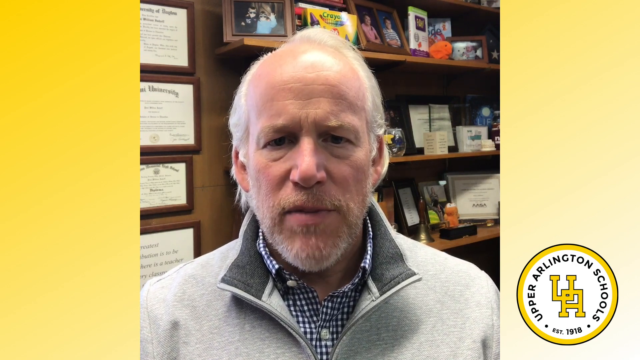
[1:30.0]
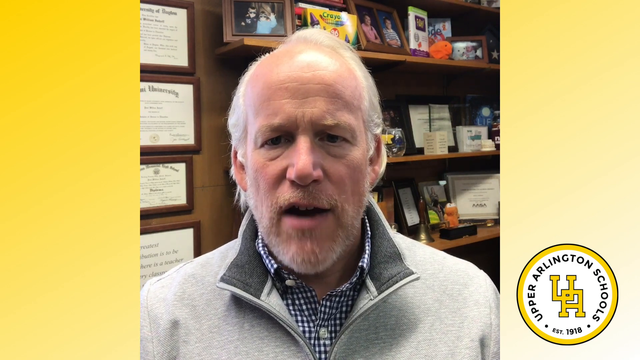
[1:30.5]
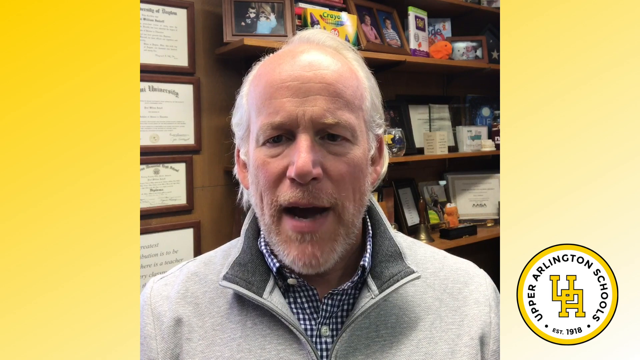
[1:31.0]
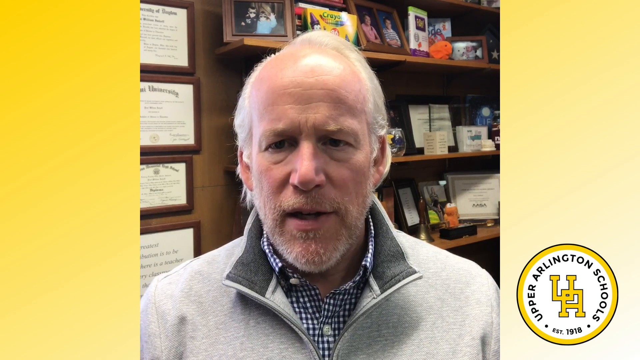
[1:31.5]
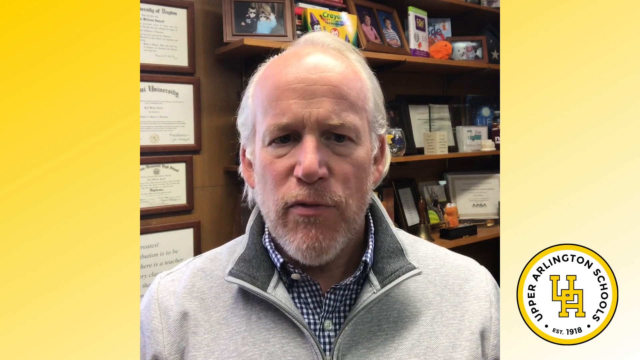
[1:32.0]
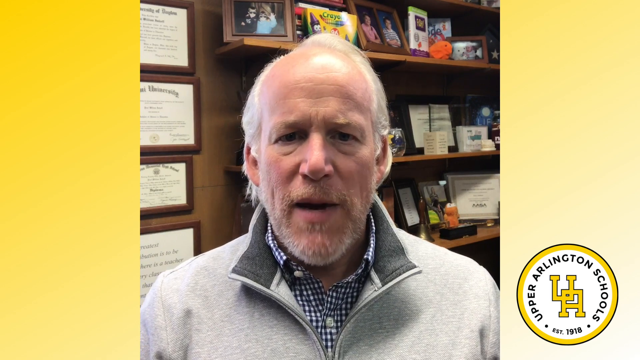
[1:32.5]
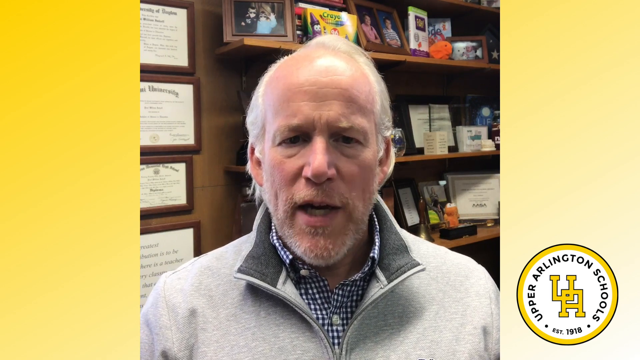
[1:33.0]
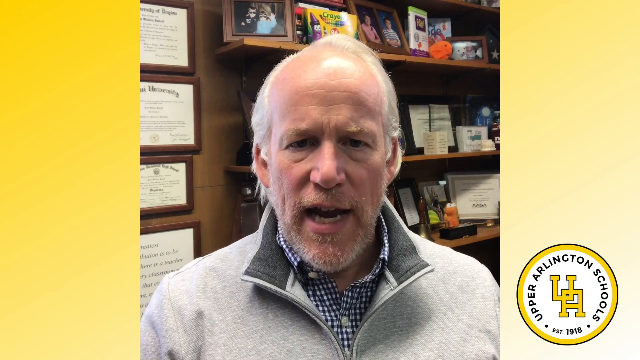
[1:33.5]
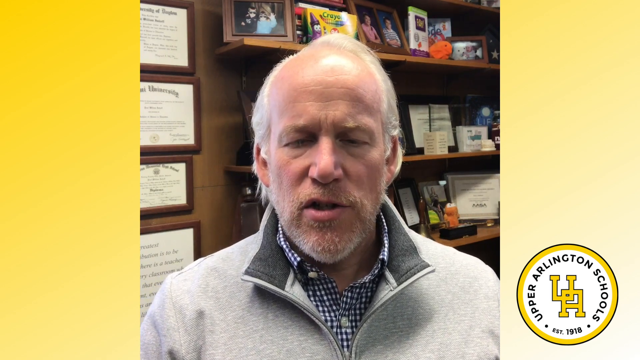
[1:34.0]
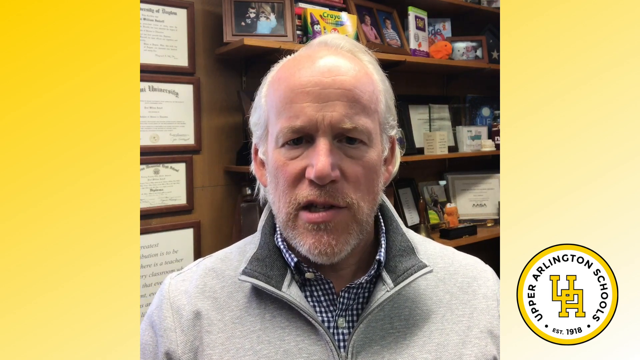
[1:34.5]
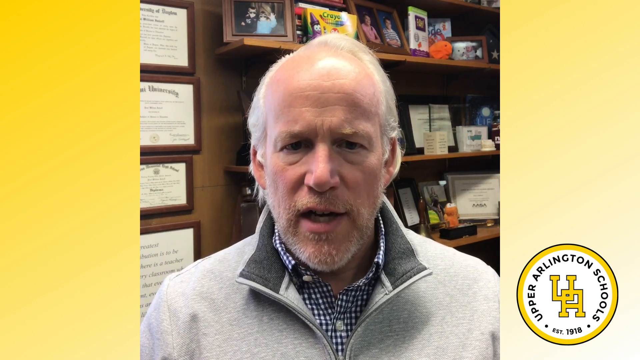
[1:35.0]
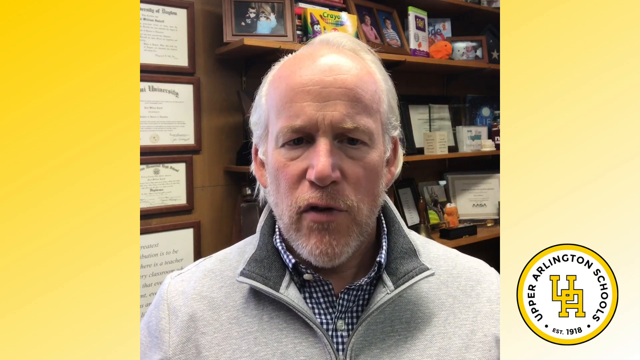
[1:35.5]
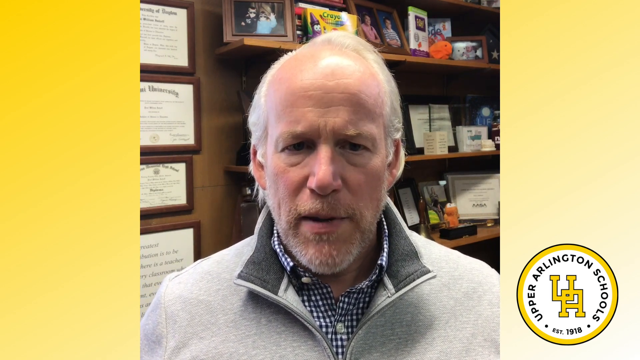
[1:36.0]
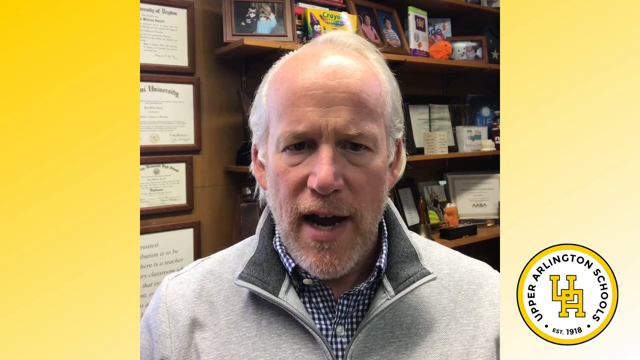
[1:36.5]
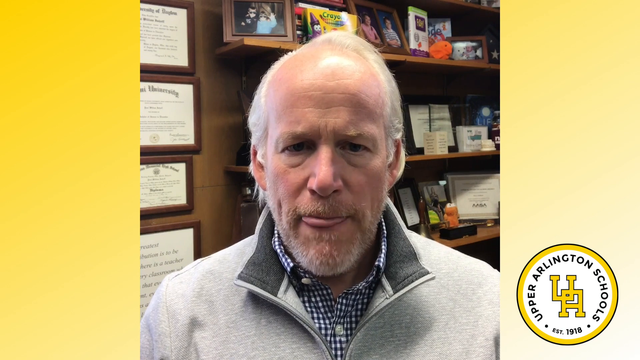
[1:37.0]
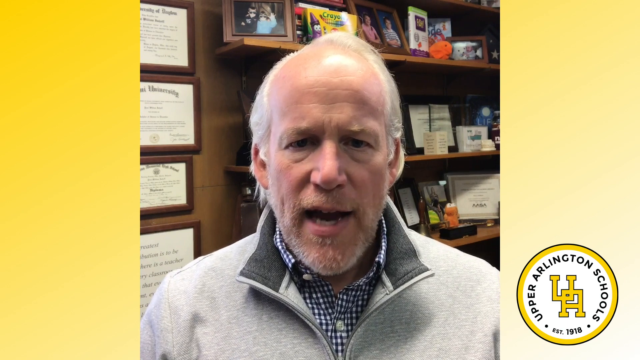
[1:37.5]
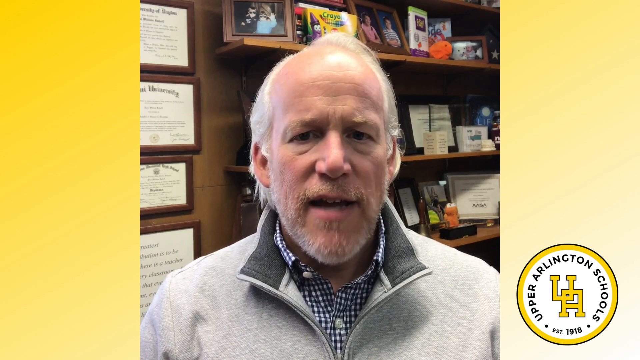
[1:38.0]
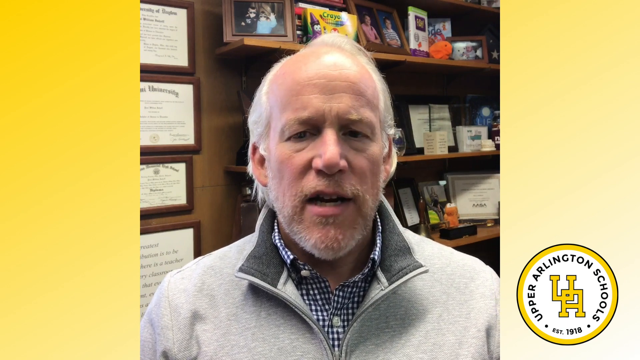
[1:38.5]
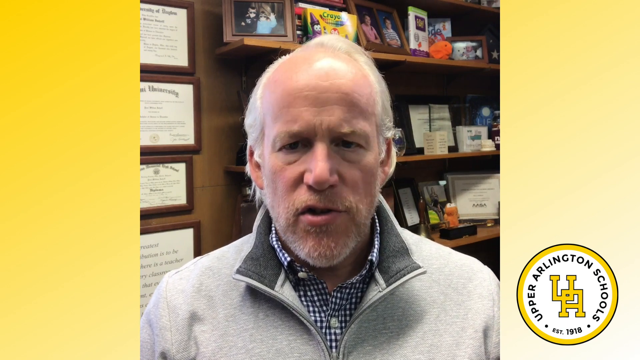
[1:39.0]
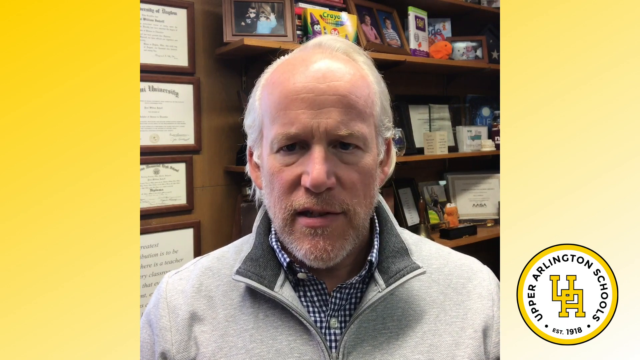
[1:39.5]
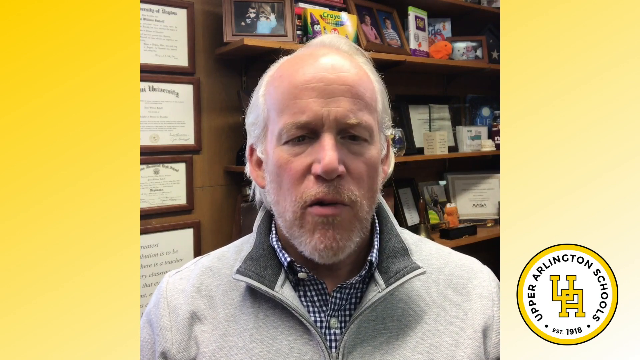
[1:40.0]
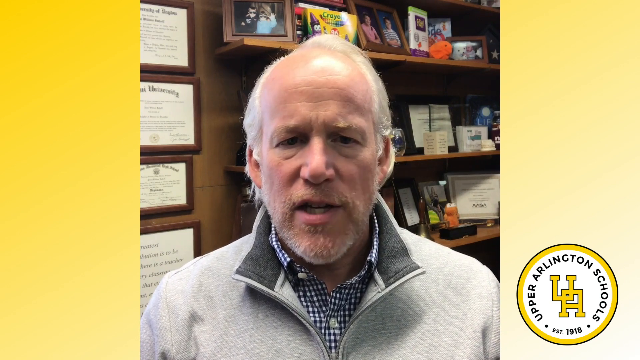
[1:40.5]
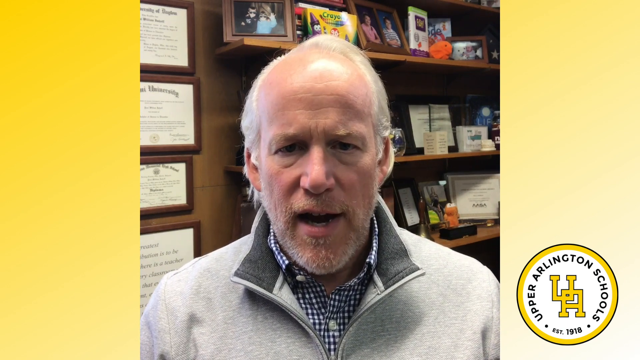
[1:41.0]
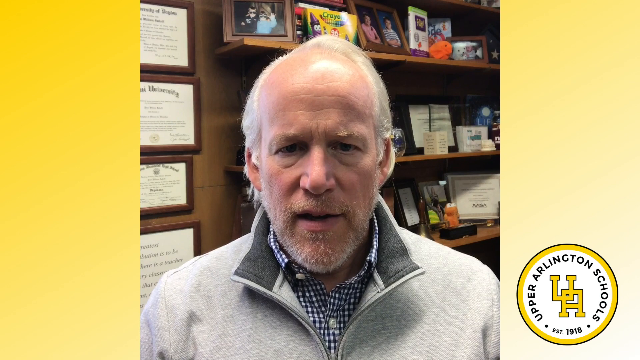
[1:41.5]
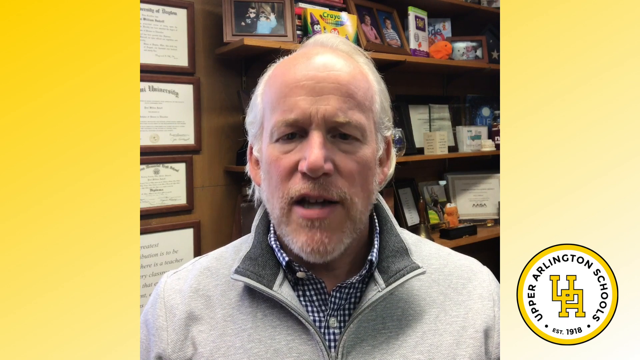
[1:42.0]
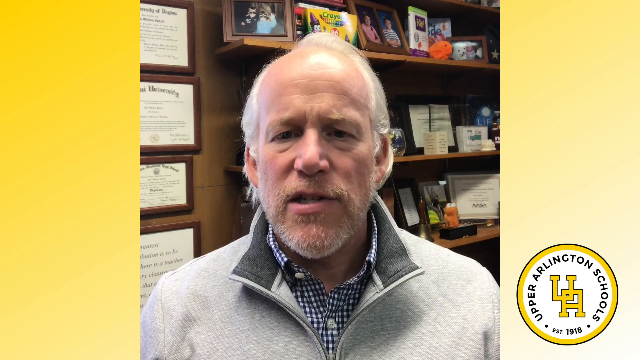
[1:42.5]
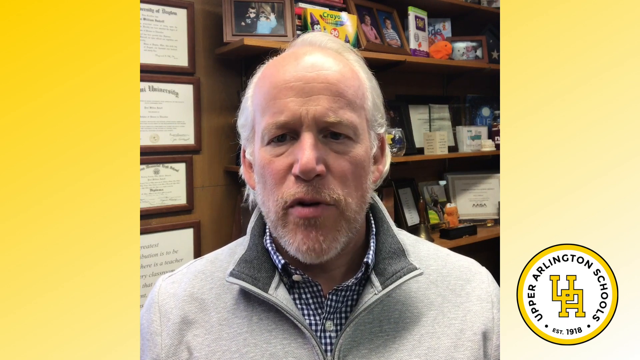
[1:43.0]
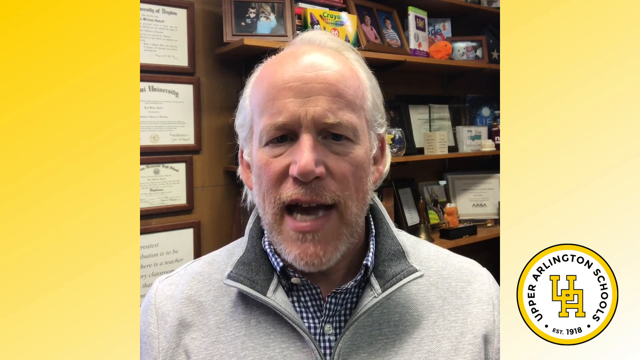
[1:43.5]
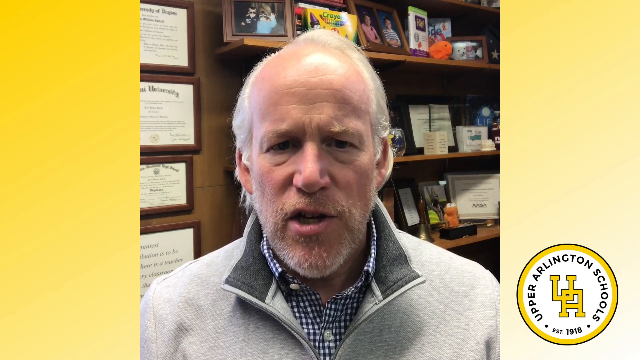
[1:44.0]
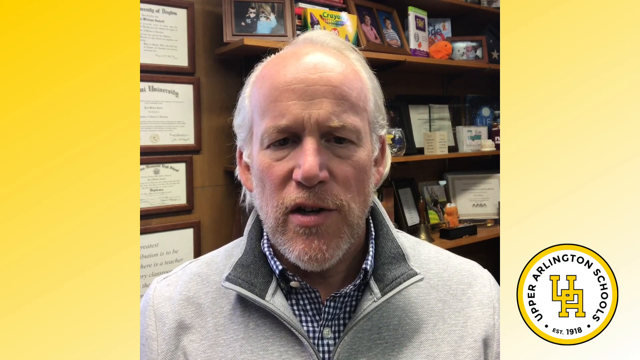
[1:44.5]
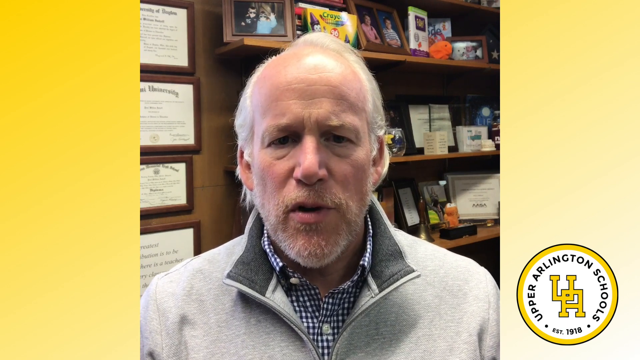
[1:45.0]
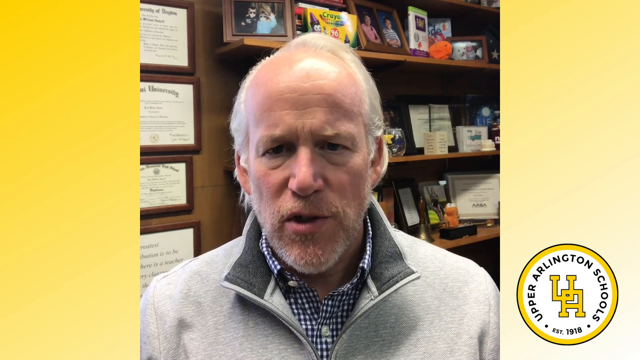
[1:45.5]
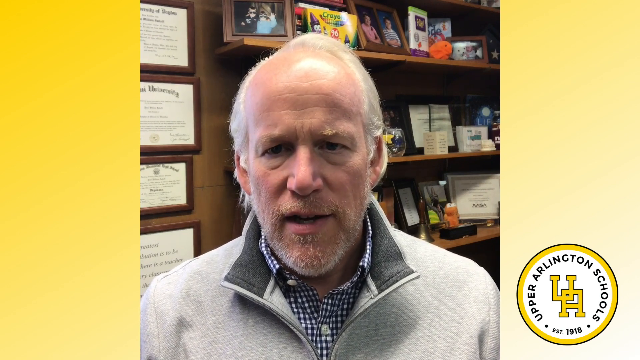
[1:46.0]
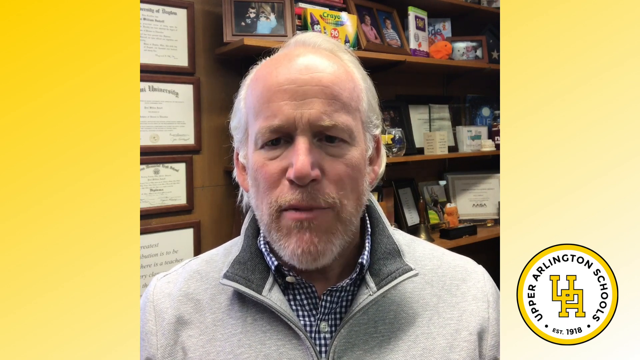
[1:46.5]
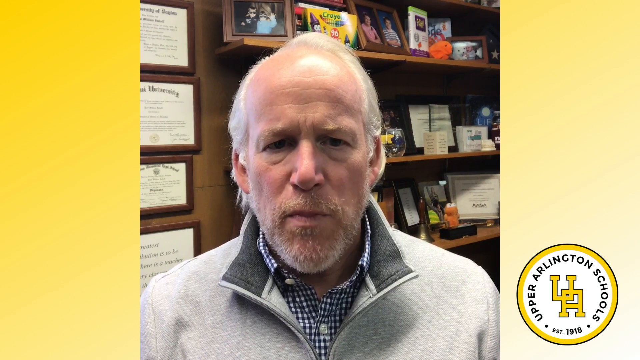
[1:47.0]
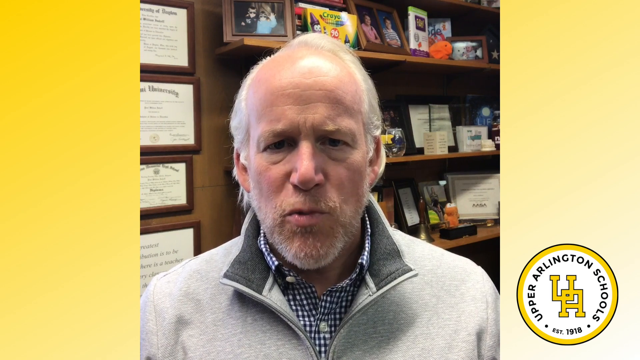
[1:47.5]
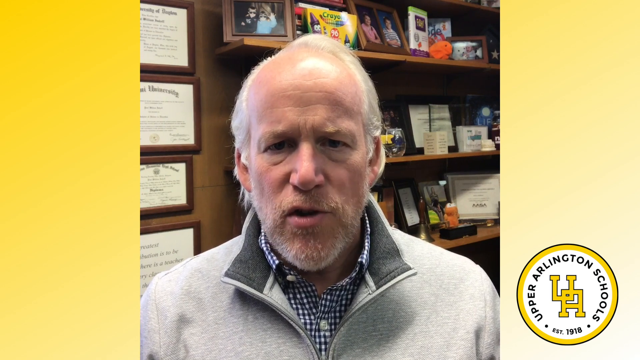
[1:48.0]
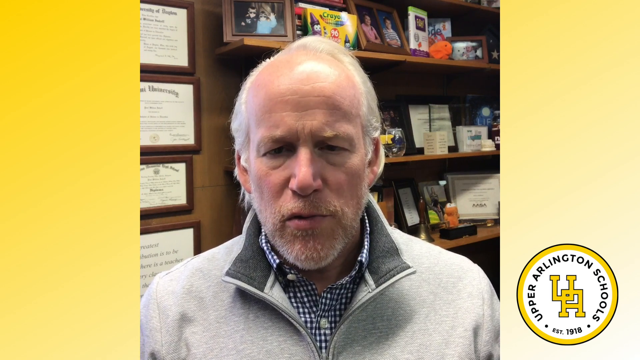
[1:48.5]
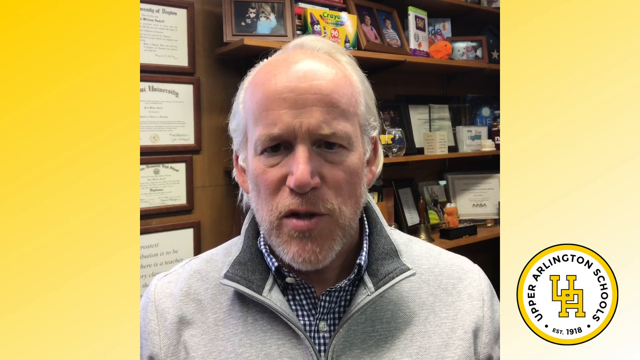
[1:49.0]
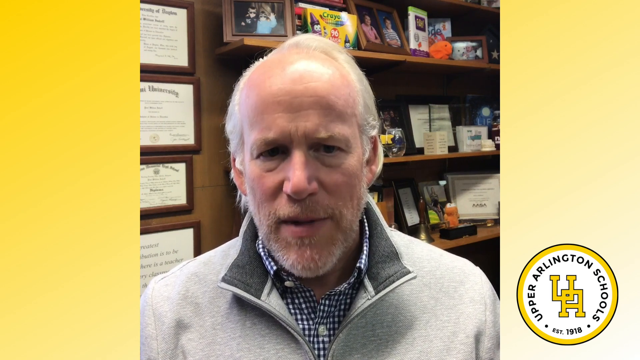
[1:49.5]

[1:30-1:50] The older man talks, possibly to the parents of students. Behind him is a shelf full of pictures and awards, with what are possibly his educational diplomas on the left side of the shelf. In the right corner of the video is the Upper Arlington Schools emblem, a circle with a black line and a thicker line inside it, showing "Upper Arlington Schools" and "EST 1918" with a U and an A, both yellow. The very back of the video is a yellow and white gradient.